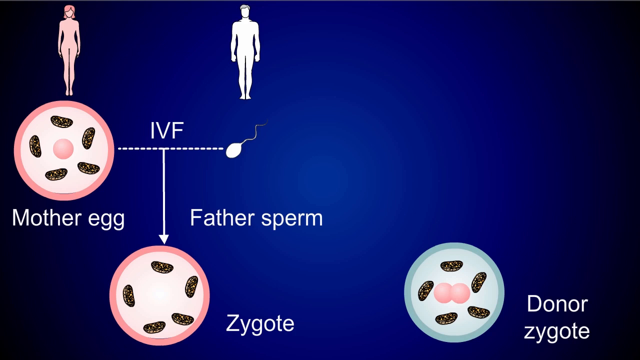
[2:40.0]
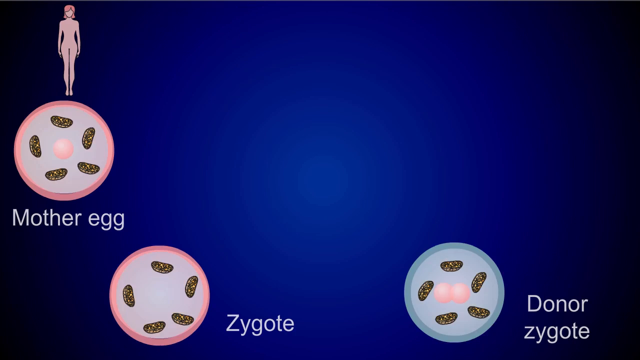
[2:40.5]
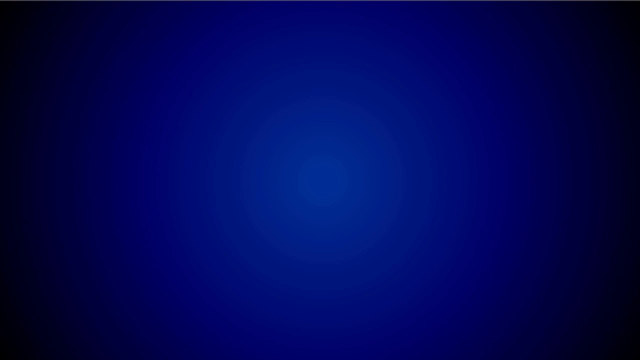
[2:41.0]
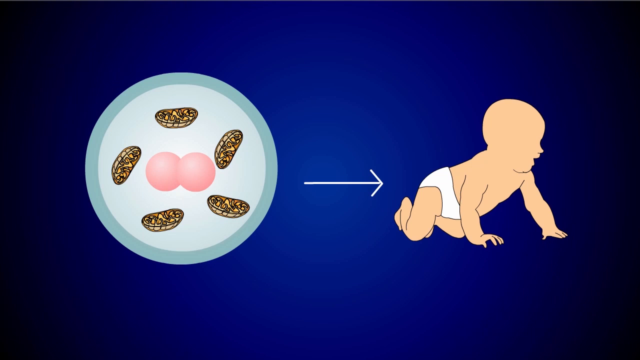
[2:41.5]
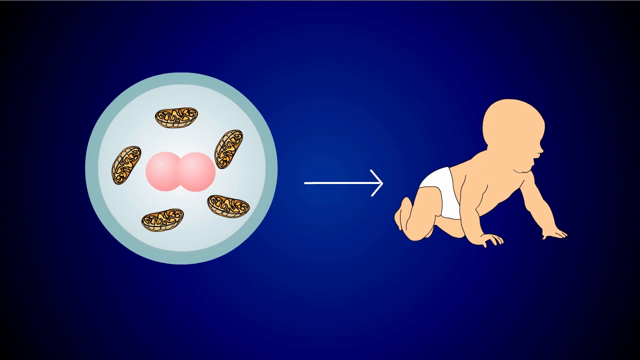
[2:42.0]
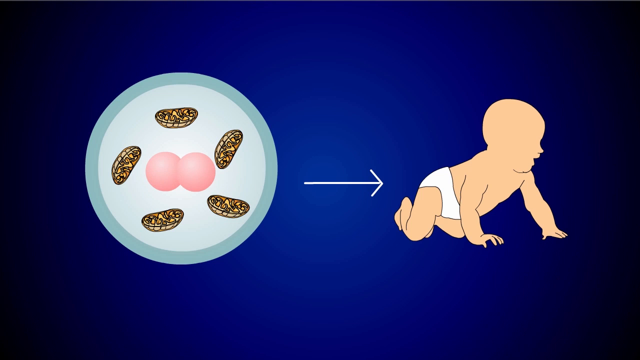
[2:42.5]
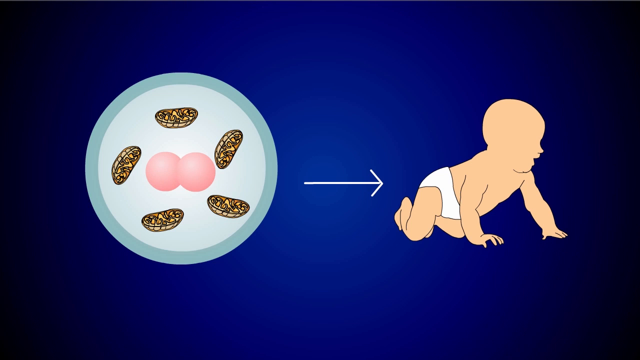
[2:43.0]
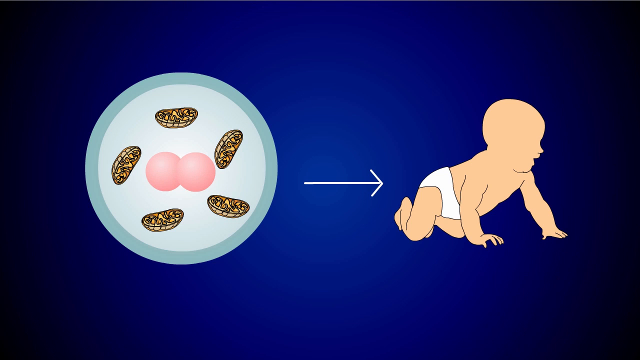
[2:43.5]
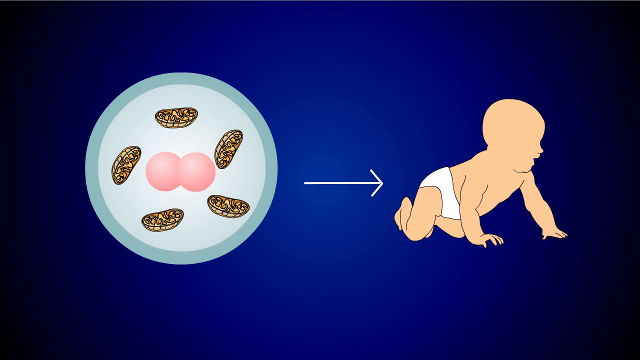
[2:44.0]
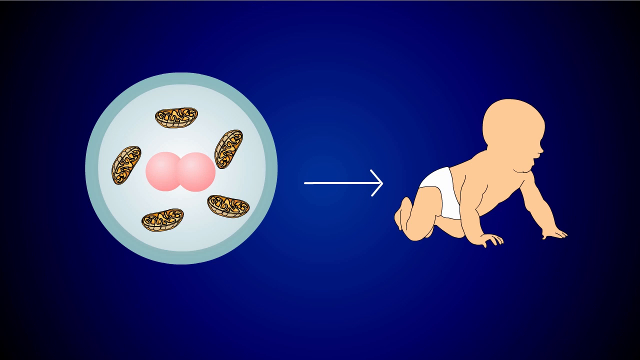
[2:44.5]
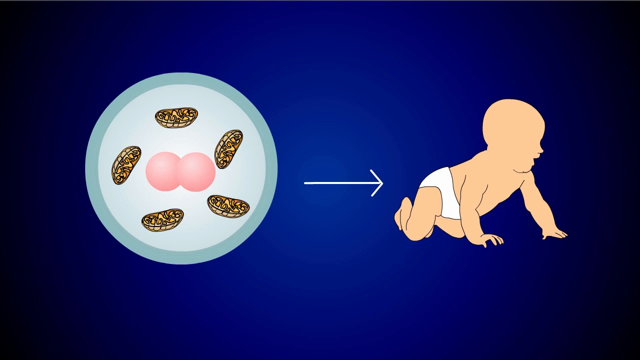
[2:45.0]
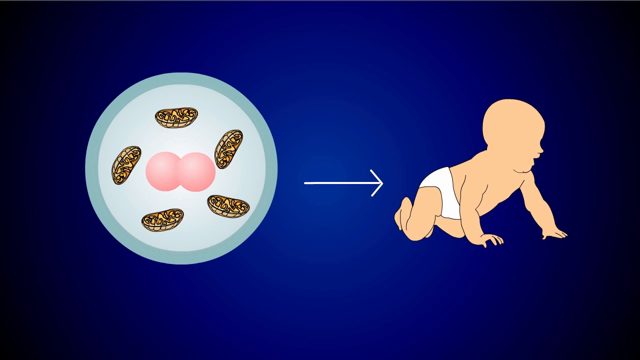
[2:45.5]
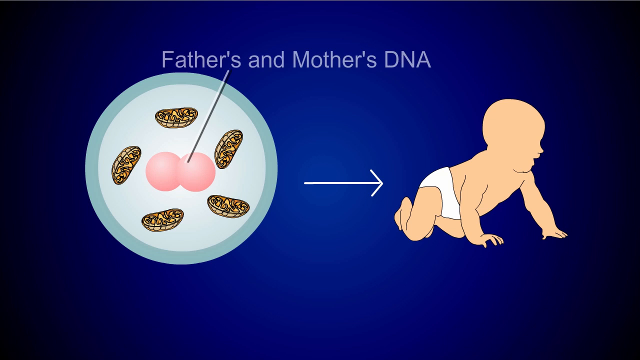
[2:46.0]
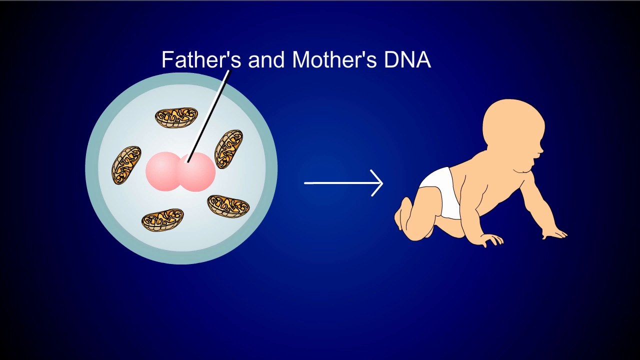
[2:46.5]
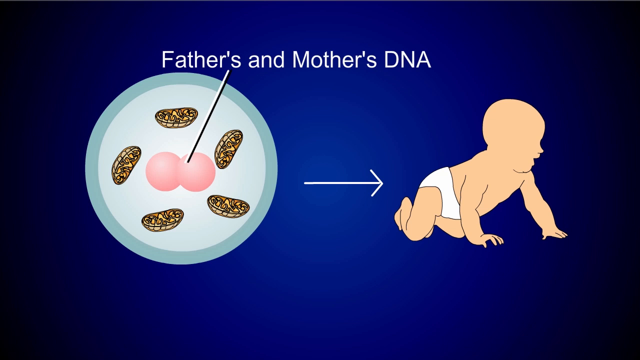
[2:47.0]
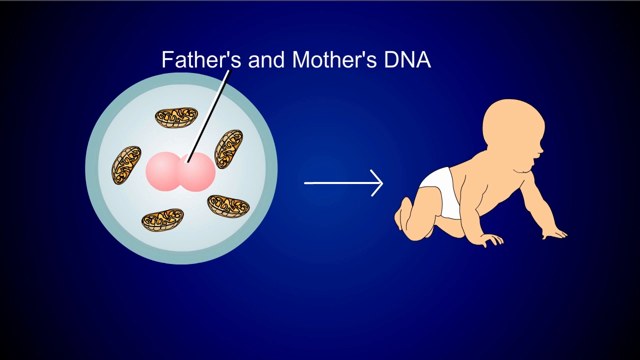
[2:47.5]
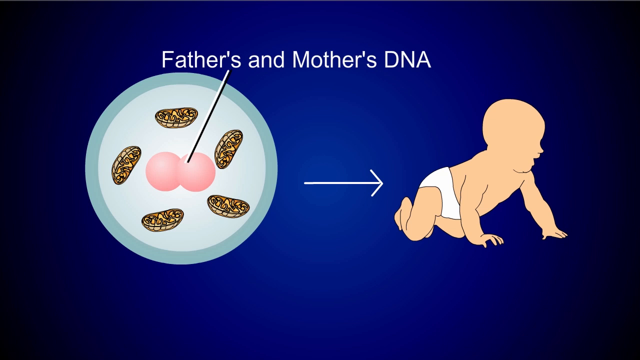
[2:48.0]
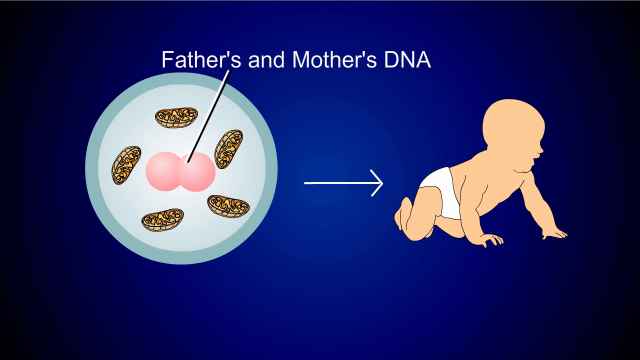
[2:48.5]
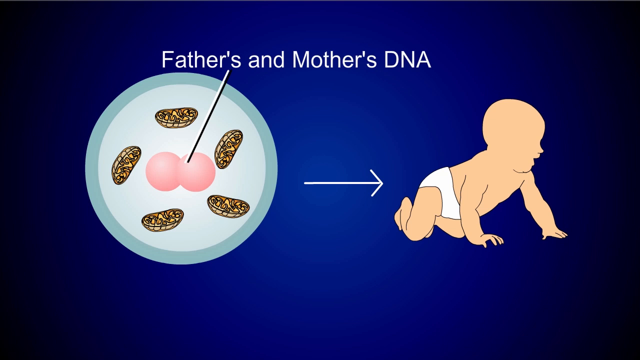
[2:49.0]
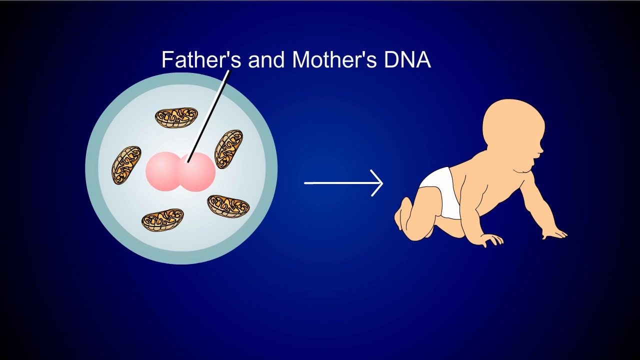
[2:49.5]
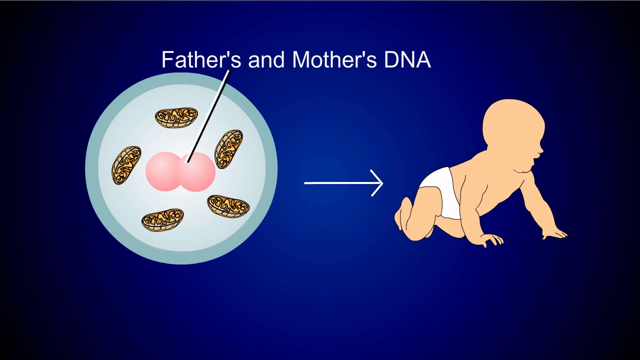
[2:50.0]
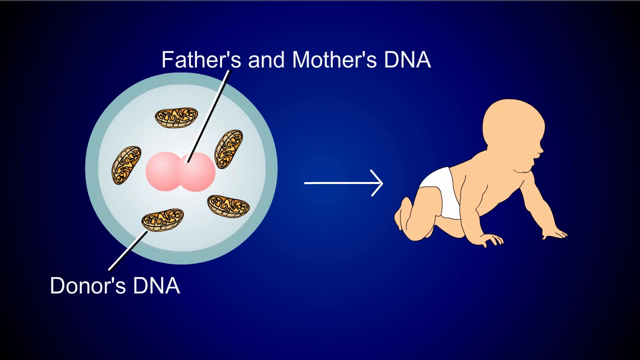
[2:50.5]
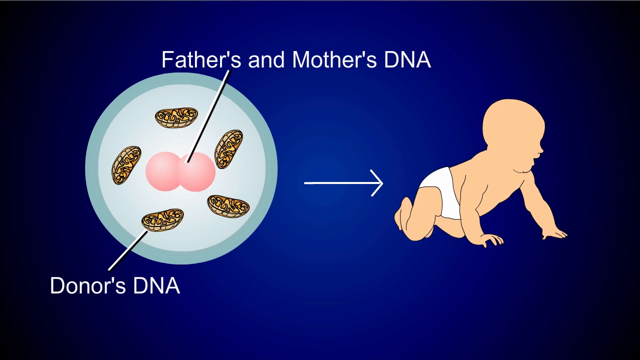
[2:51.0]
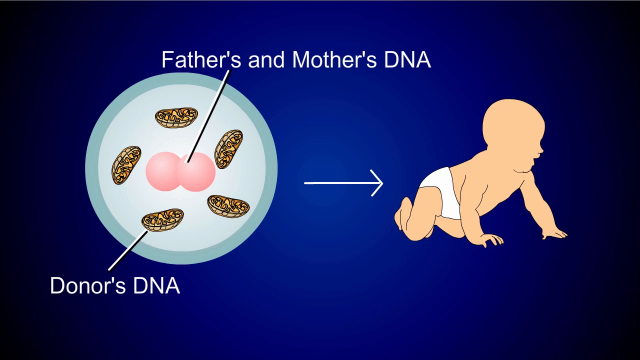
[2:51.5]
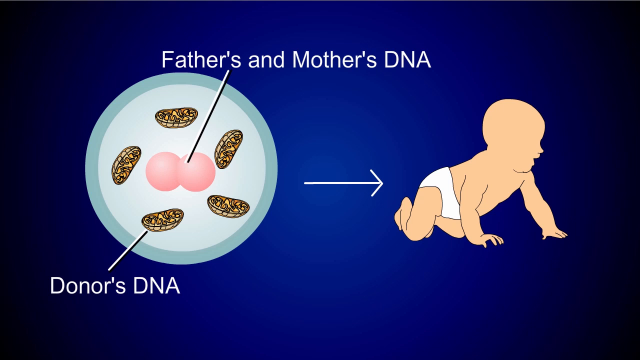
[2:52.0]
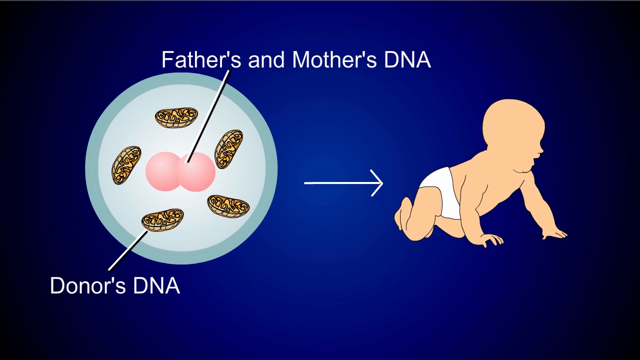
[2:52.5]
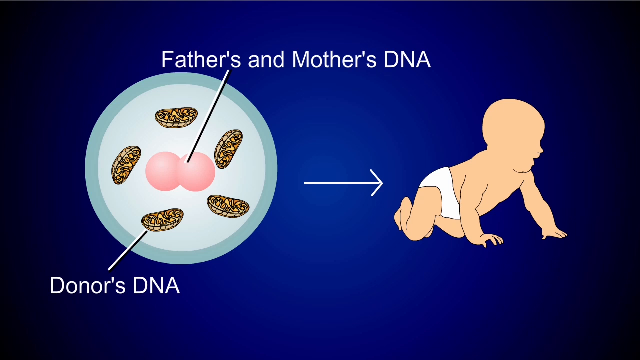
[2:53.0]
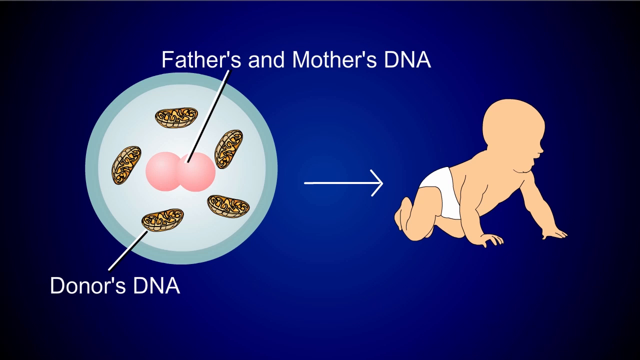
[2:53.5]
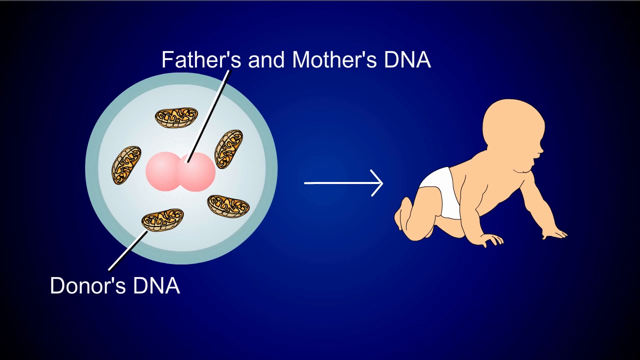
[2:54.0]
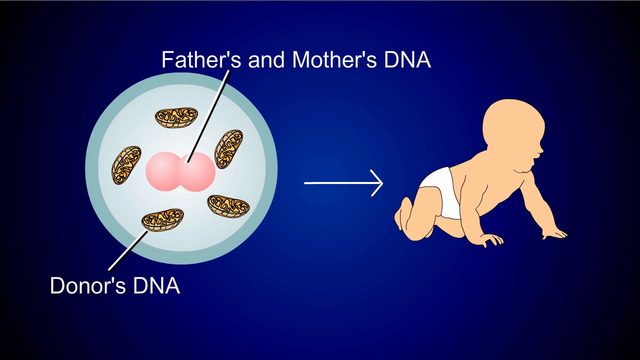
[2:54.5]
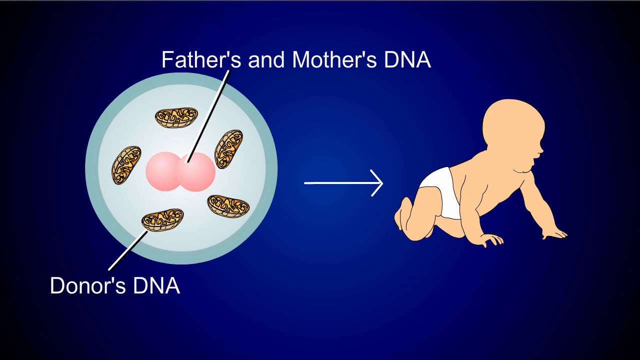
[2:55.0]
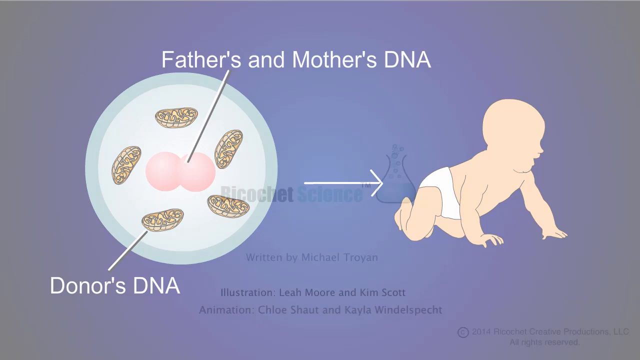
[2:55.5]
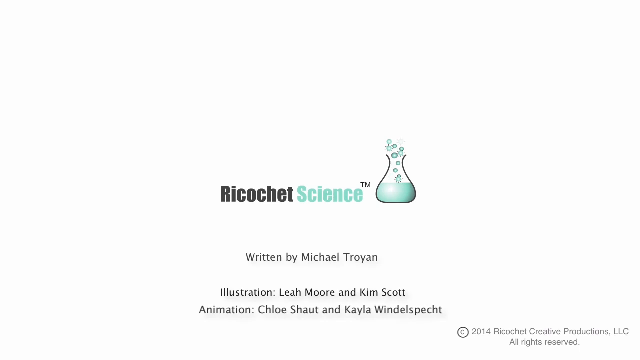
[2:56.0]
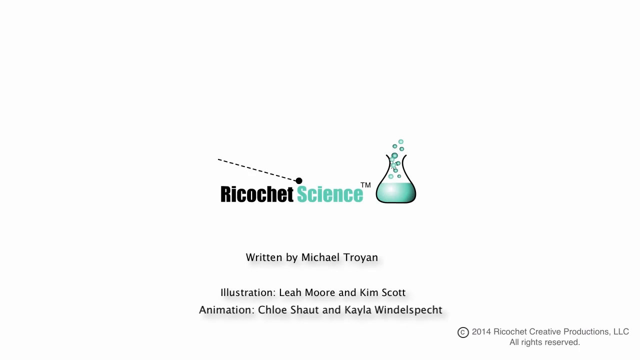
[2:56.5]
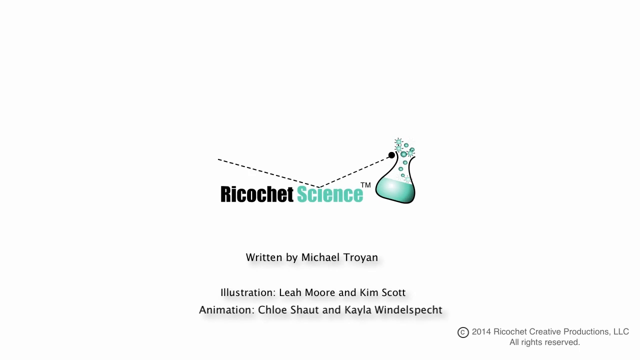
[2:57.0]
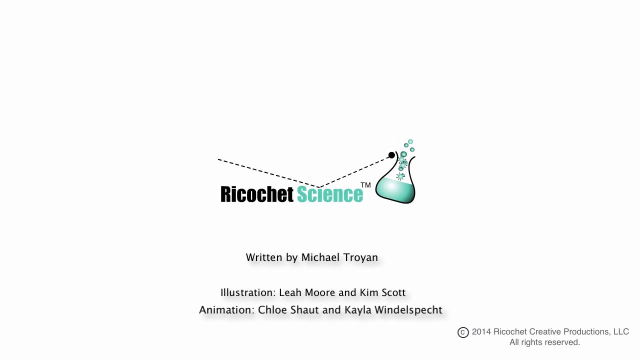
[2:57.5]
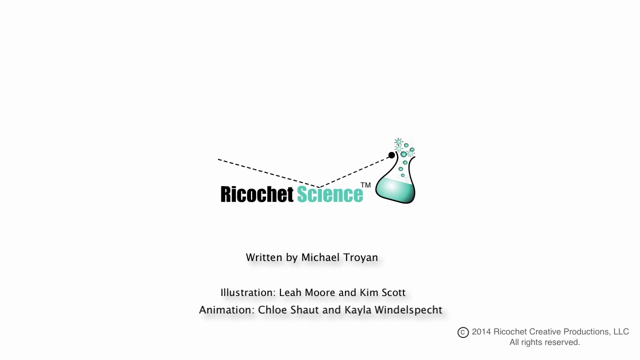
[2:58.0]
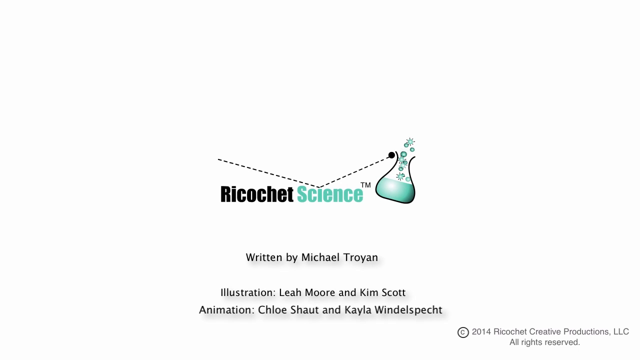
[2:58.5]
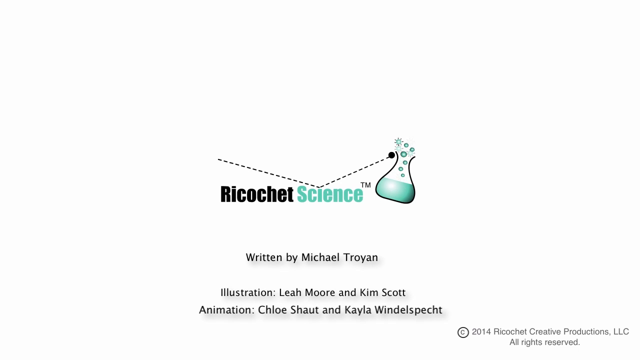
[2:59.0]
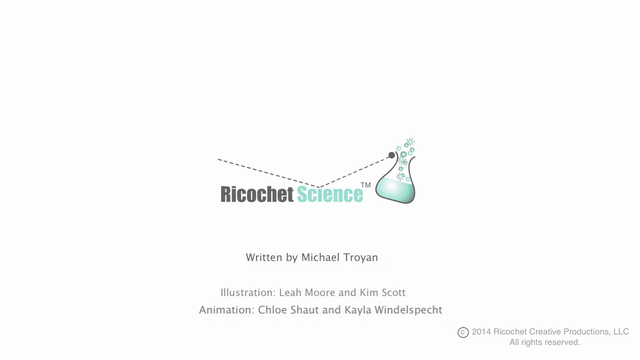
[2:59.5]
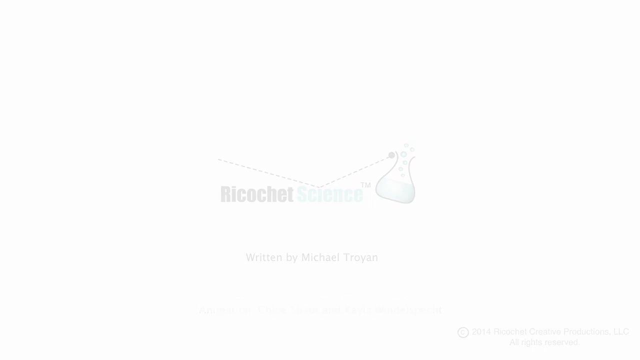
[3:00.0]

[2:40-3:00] The process of three-parent fertilization for in vitro fertilization is shown: the big cell now has the father's and mother's DNA inside, and together with the donor's DNA it makes the baby that the arrow points to on the right, a baby wearing a white diaper. Then the emblem appears reading "Ricochet Science", showing a beaker being tipped over by a ball that has ricocheted off the word science. Small print below reads "written by Michael Troyan", and information at the bottom reads "Illustration: Leah Moore and Kim Scott" and "Animation, Chloe Schott and Kayla Windelspeck". The screen then slowly and gradually turns mostly white.